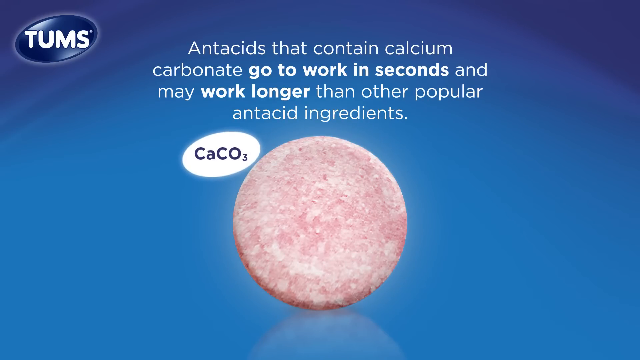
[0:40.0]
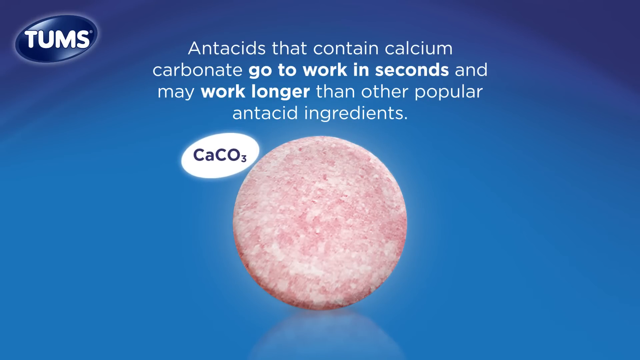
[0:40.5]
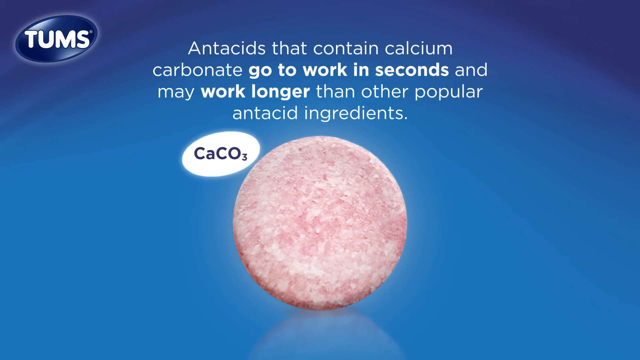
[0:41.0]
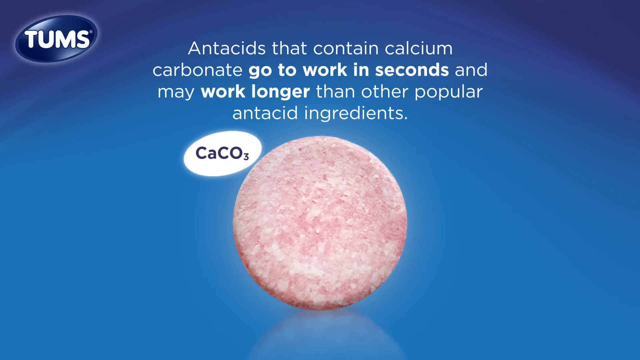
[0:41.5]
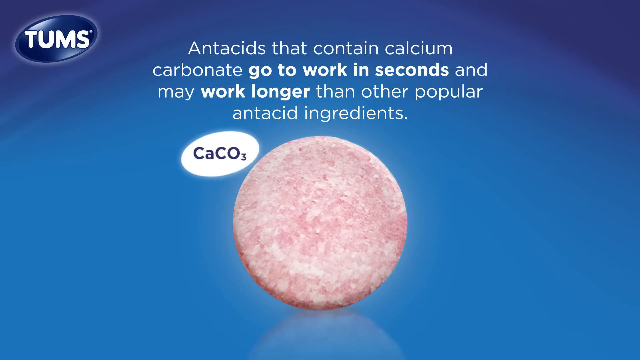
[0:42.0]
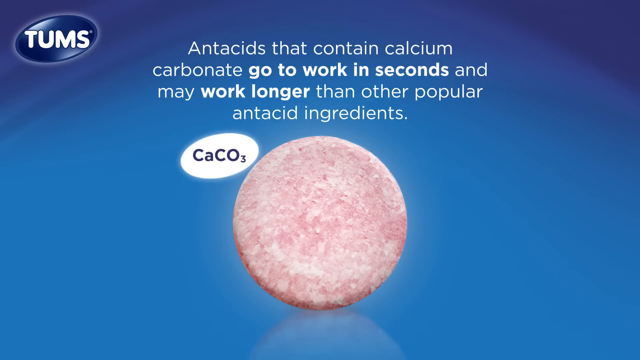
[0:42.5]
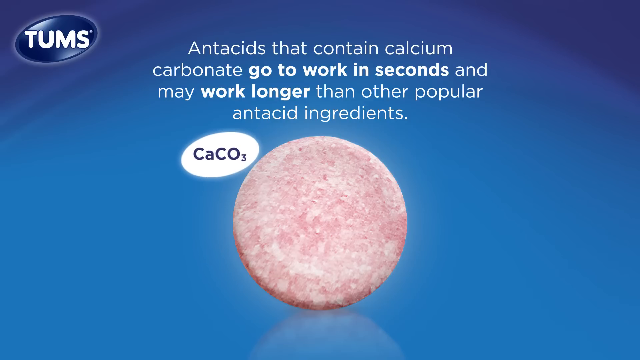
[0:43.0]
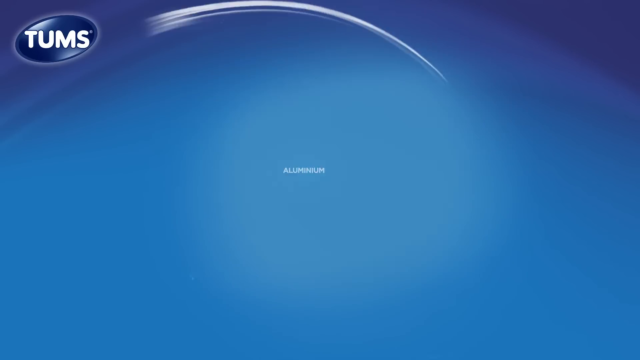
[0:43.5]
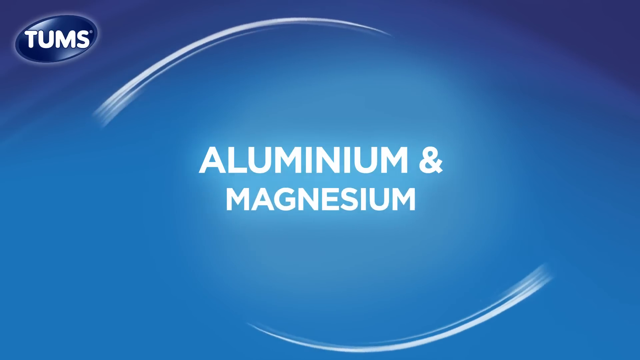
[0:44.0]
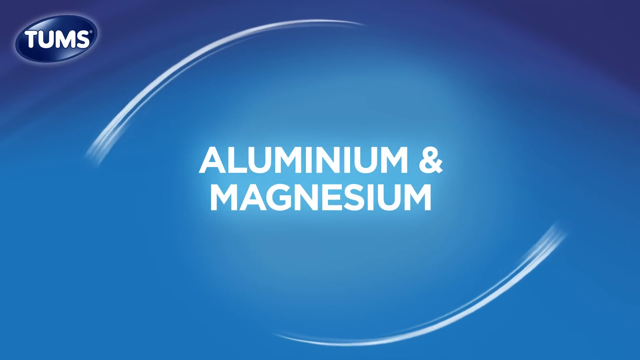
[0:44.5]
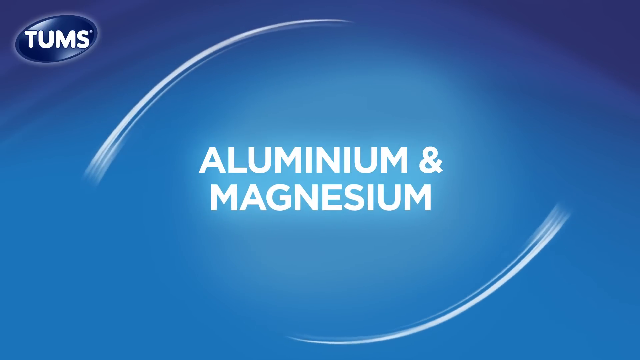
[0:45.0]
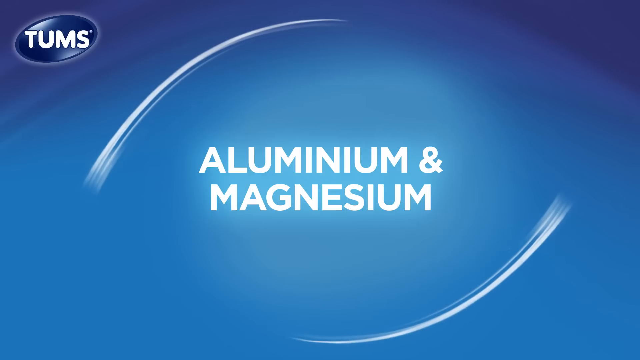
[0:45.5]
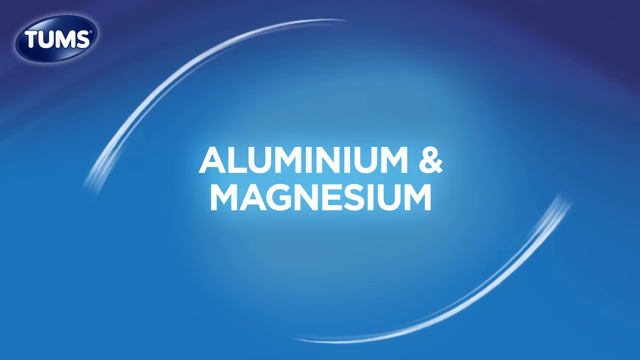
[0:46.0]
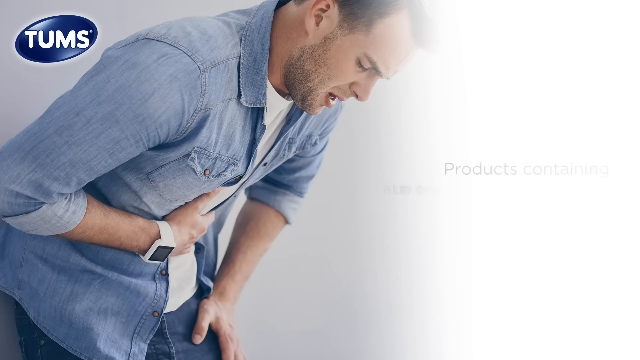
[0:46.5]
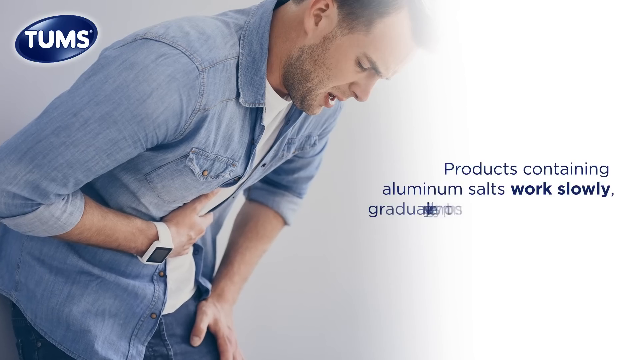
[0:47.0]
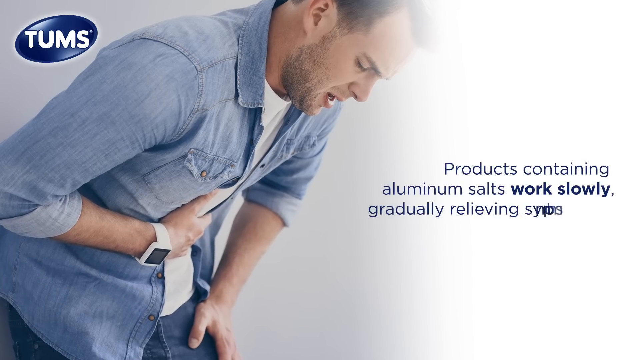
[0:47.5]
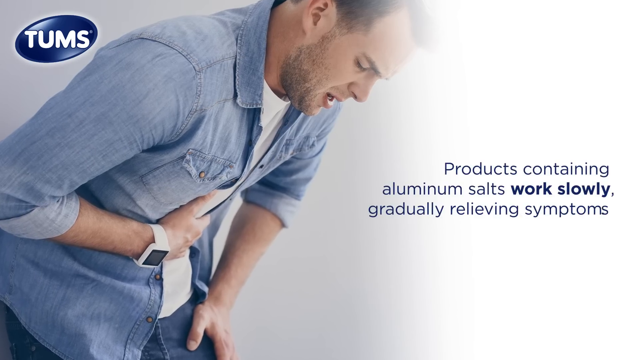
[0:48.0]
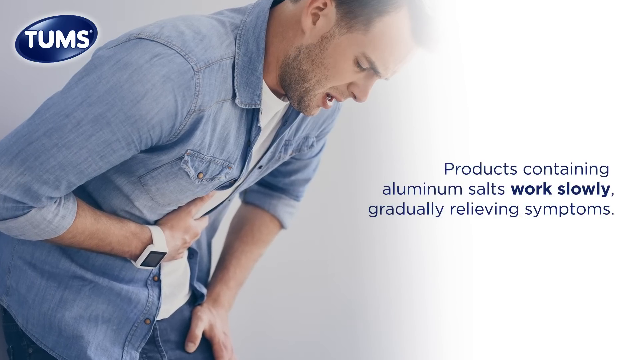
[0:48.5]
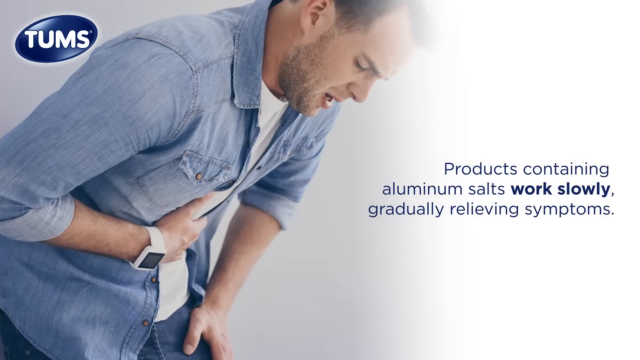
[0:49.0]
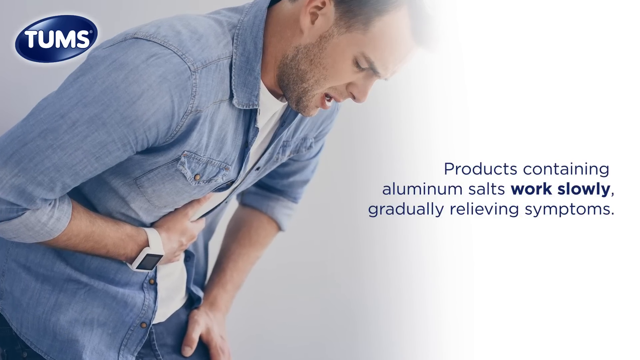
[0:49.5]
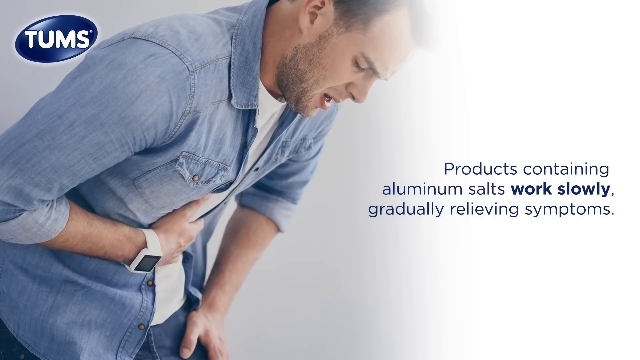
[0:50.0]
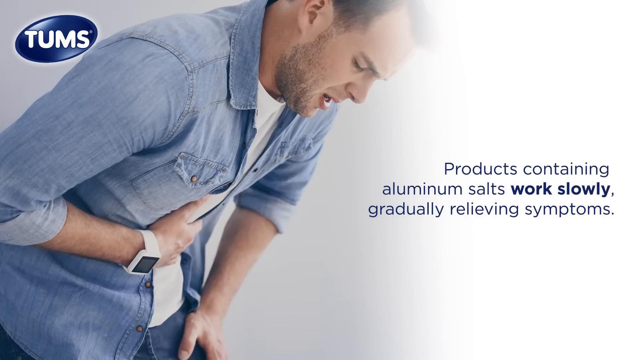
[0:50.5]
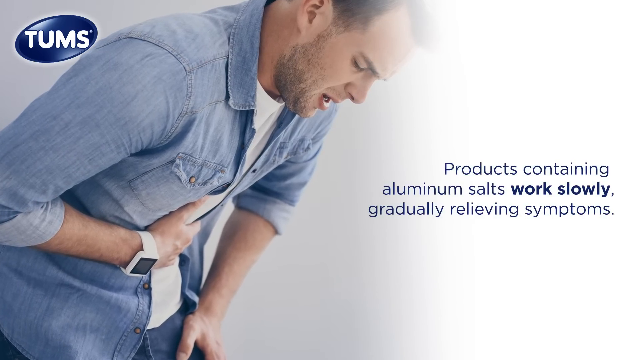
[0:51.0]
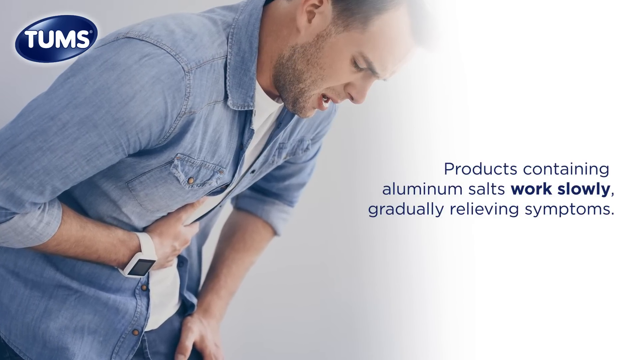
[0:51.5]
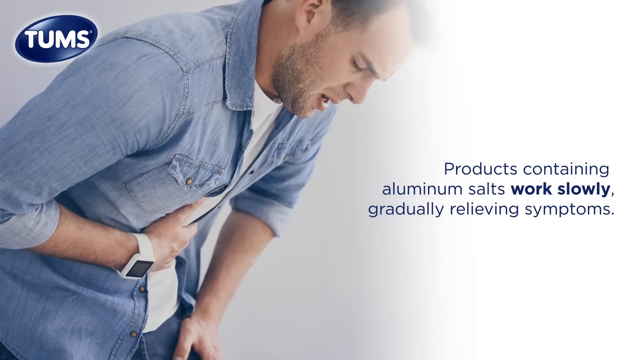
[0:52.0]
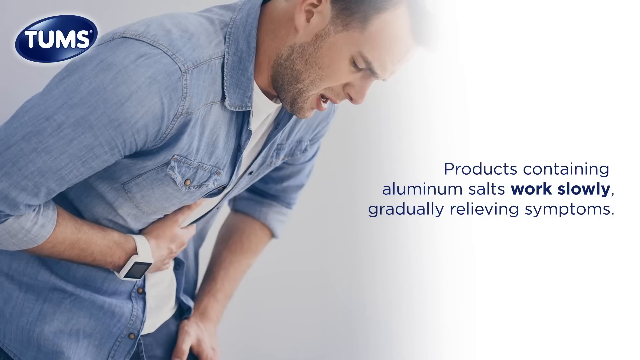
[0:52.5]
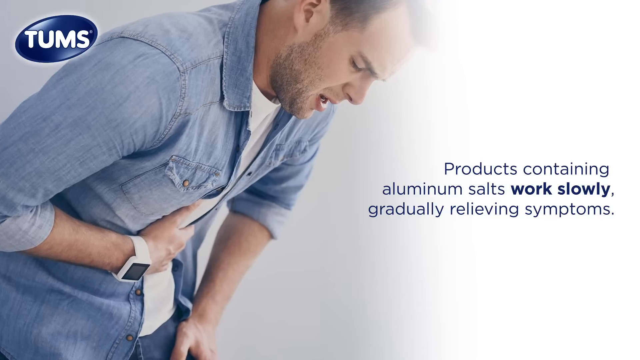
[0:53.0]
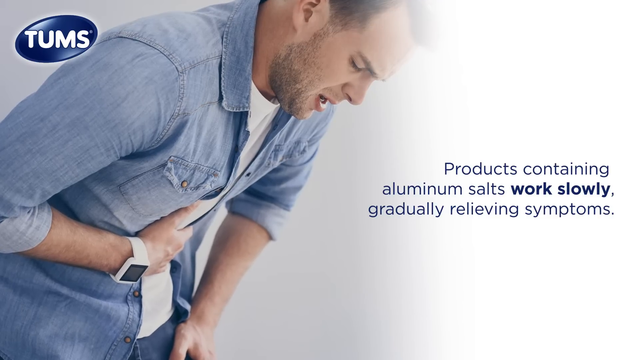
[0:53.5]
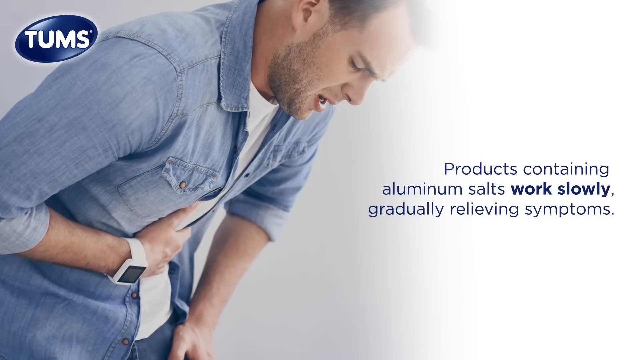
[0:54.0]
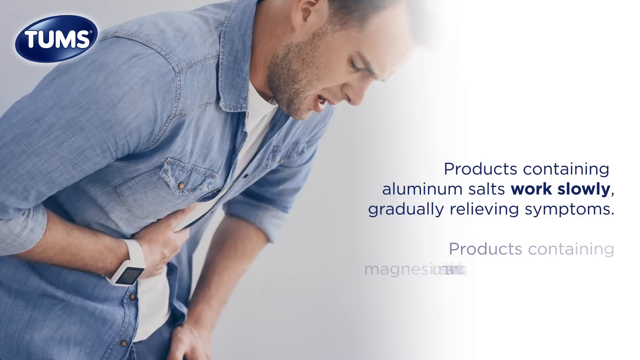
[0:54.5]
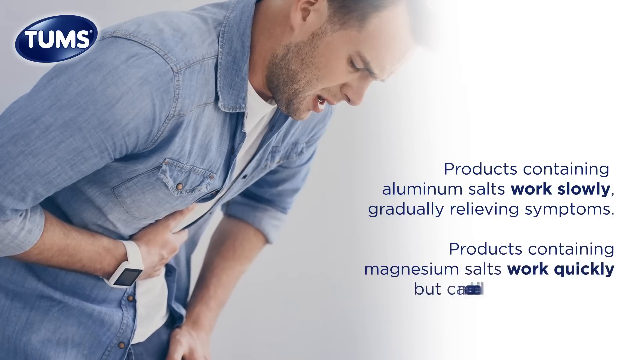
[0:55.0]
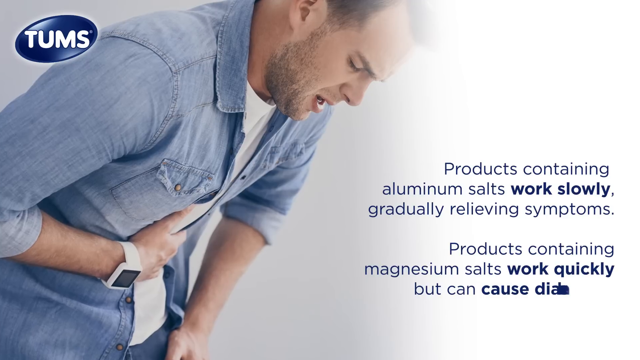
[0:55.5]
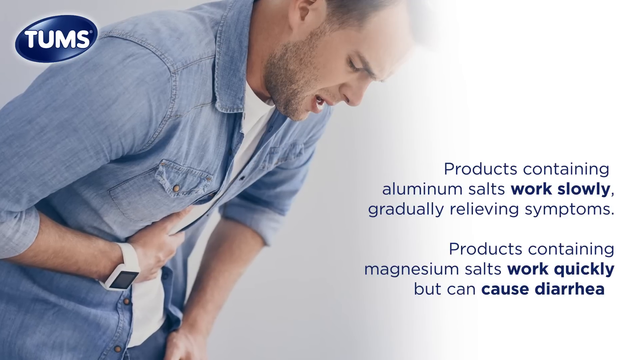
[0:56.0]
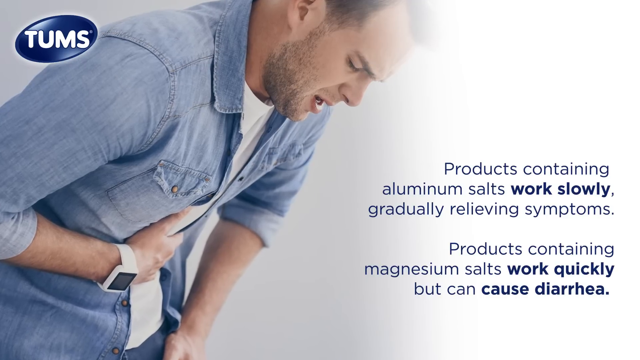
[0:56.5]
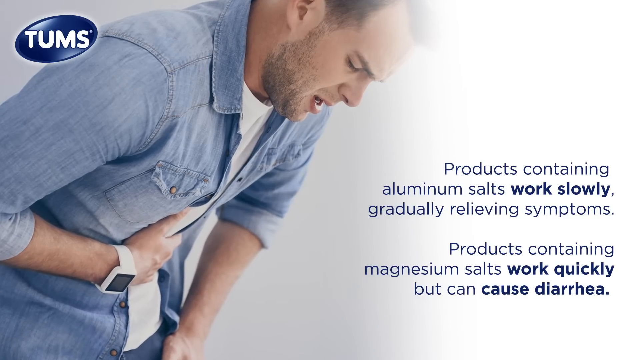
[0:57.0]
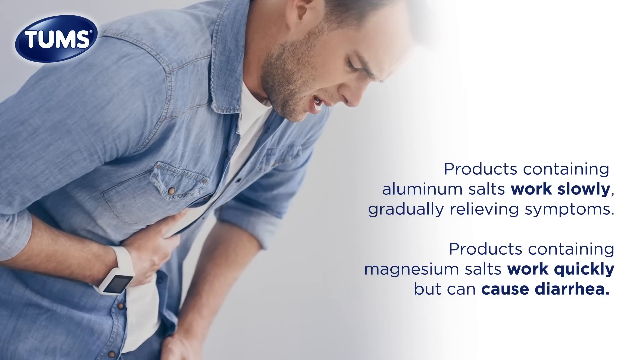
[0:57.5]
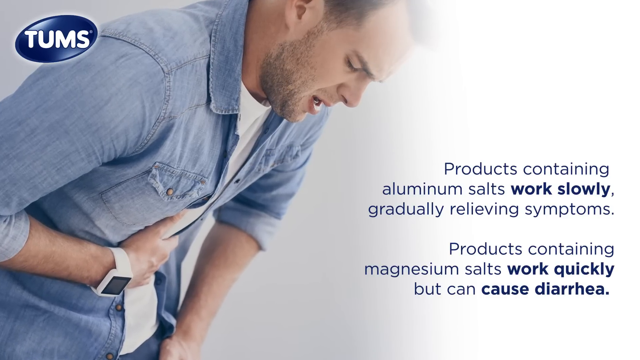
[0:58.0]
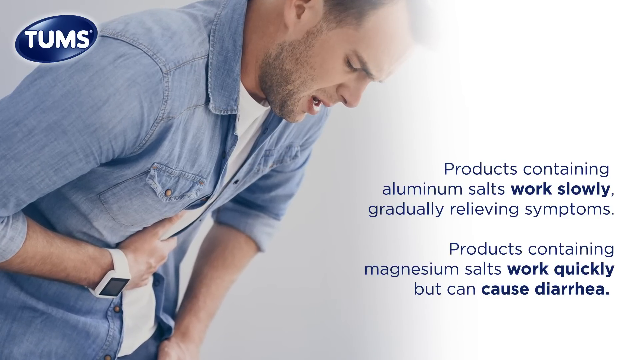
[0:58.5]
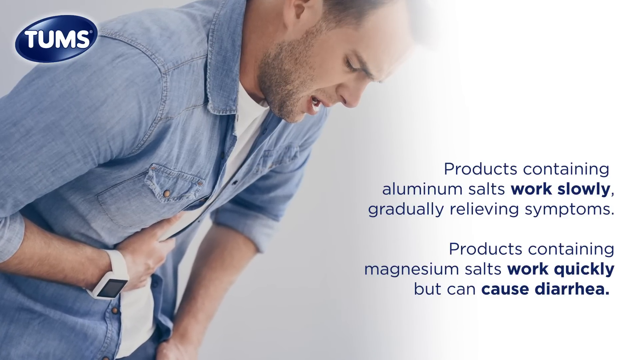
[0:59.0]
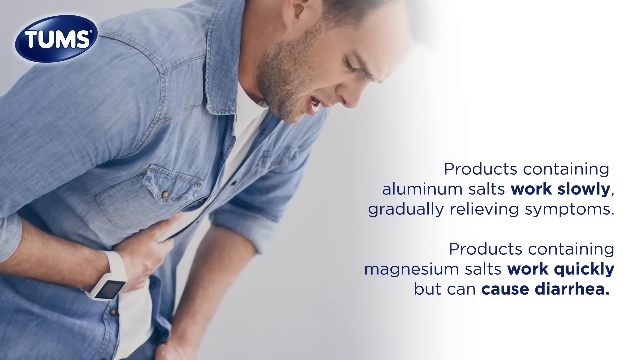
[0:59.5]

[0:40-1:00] A screen with a blue background has the Tums logo at the top left and white text in the middle reading "antacids that contain calcium carbonate may work in seconds and may work longer than other antacid products," with "go to work in seconds" and "work longer" in bold. An antacid tablet is below, with a small caption reading "CaCO2" next to it on the left. In another scene with a blue background, the words "aluminum and magnesium" pop up in white. Then a man holding his stomach is on the left, and on the right blue text reads "products containing aluminum salts work slowly and gradually relieve symptoms"; the background is now white. The view zooms into the picture of the man holding his chest, and more blue text pops up at the bottom: "products containing magnesium salts work quickly but can cause diarrhea." The words "work slowly," "work quickly" and "cause diarrhea" are bolded on this slide.